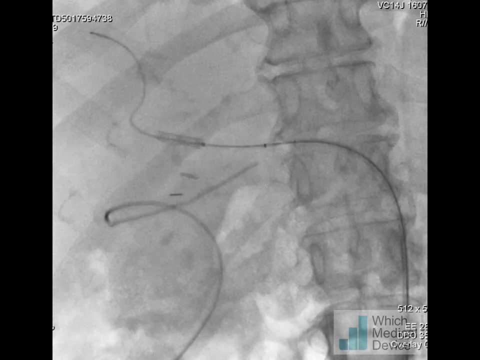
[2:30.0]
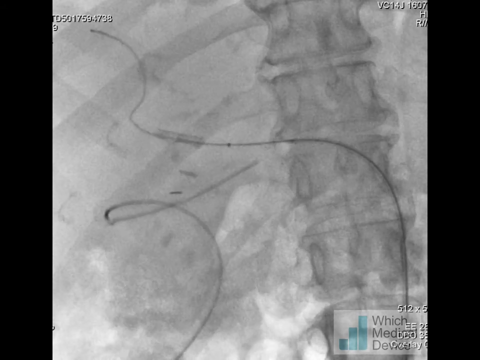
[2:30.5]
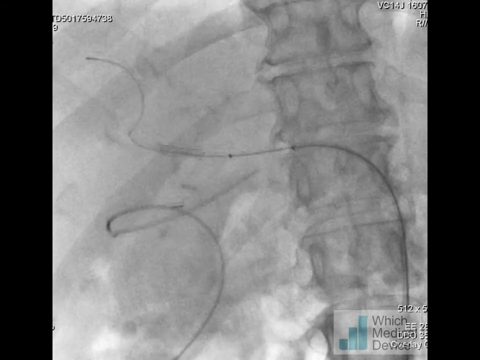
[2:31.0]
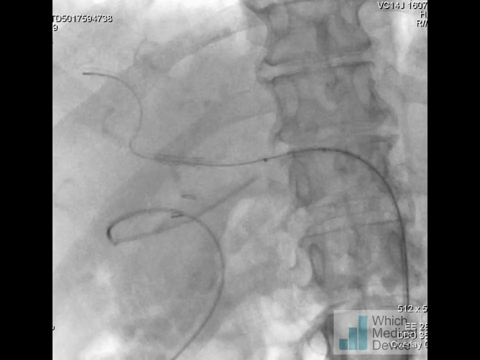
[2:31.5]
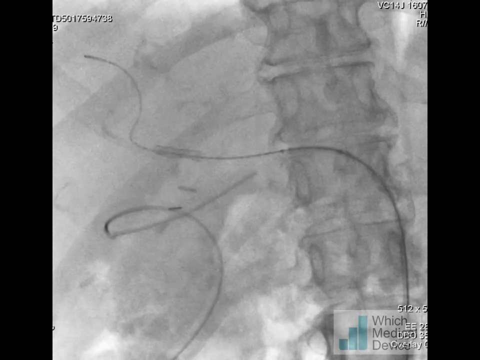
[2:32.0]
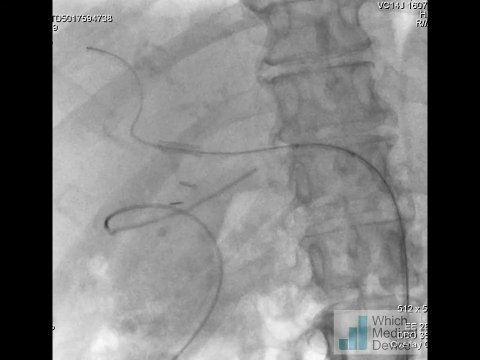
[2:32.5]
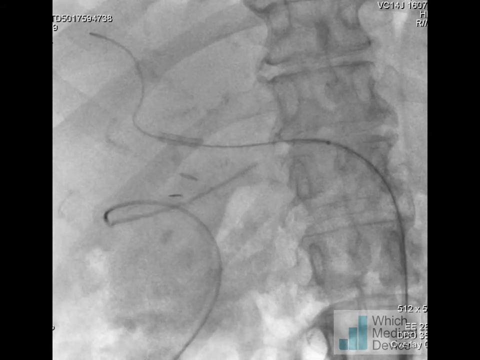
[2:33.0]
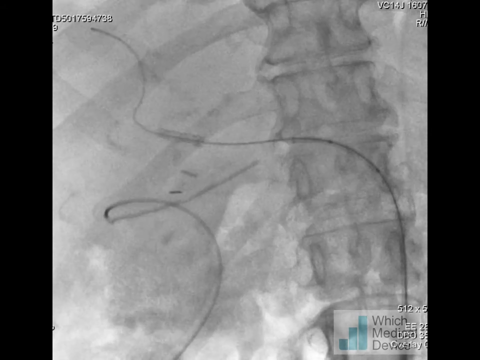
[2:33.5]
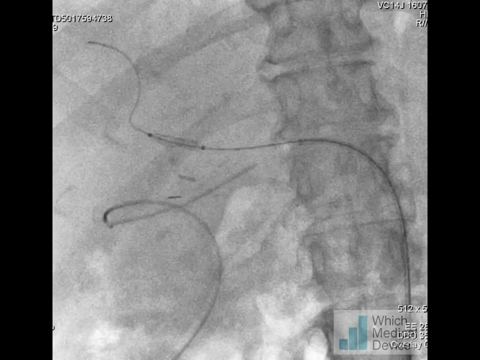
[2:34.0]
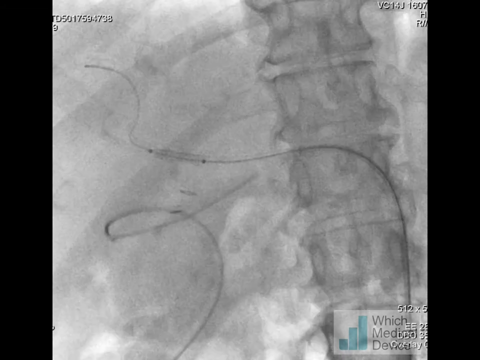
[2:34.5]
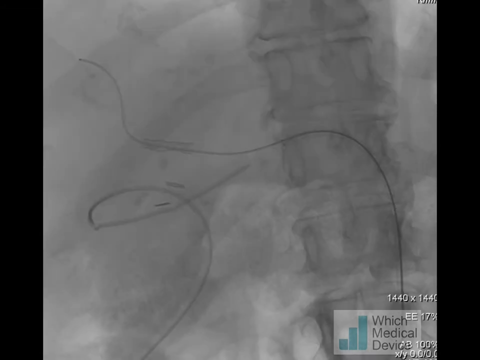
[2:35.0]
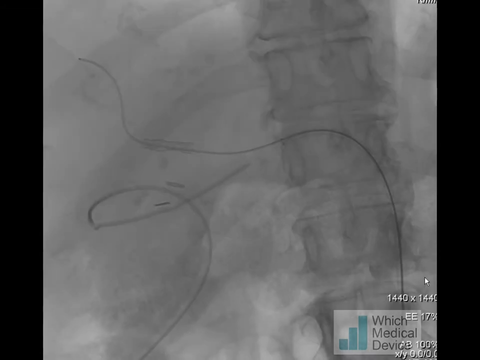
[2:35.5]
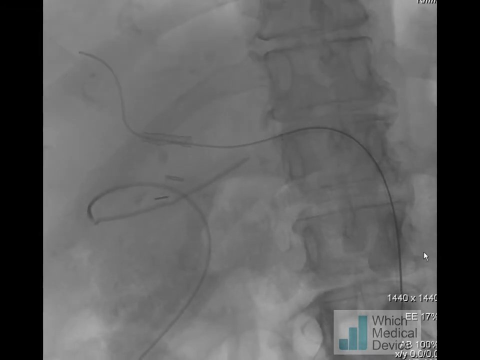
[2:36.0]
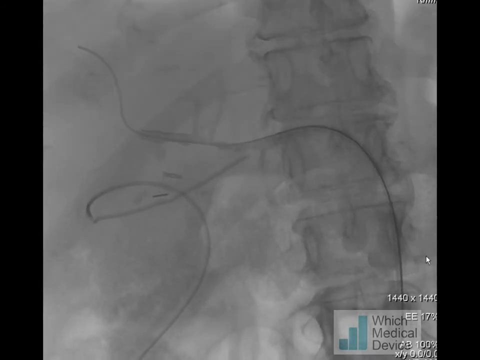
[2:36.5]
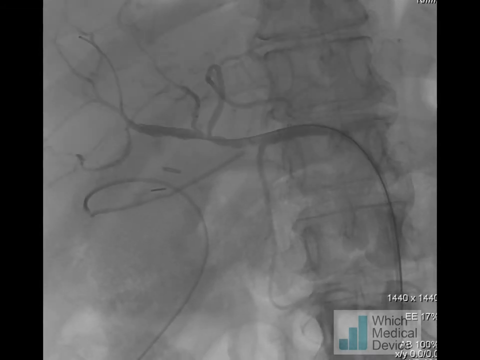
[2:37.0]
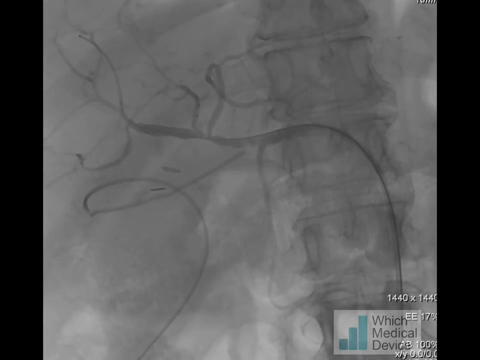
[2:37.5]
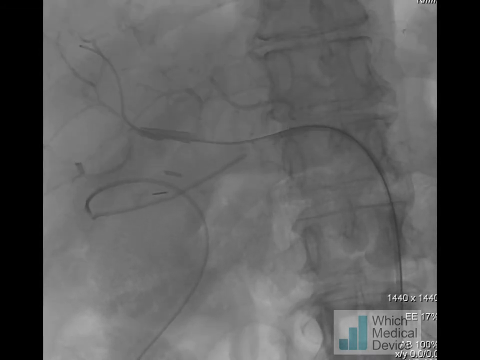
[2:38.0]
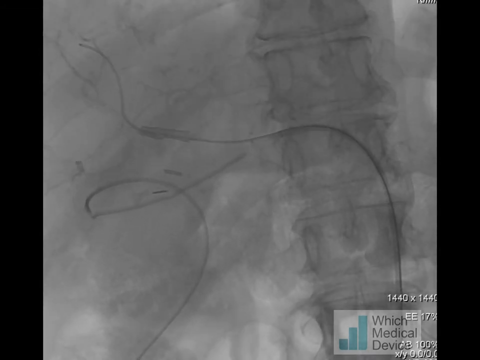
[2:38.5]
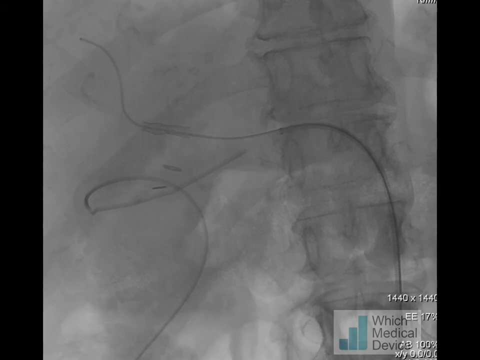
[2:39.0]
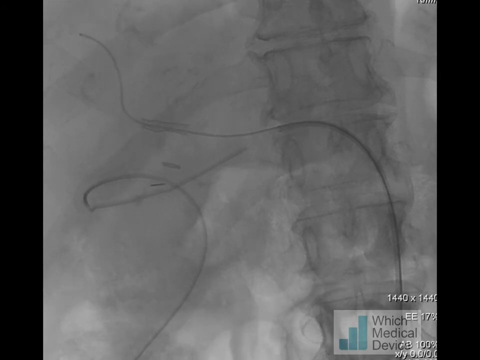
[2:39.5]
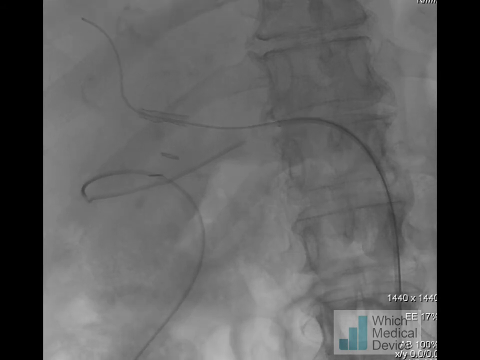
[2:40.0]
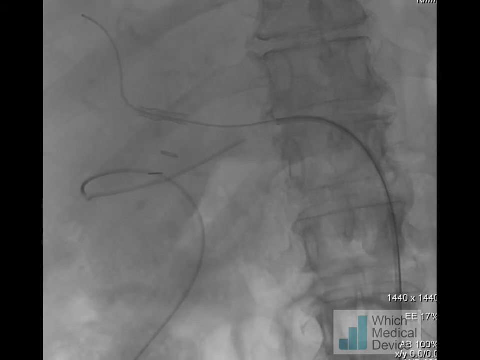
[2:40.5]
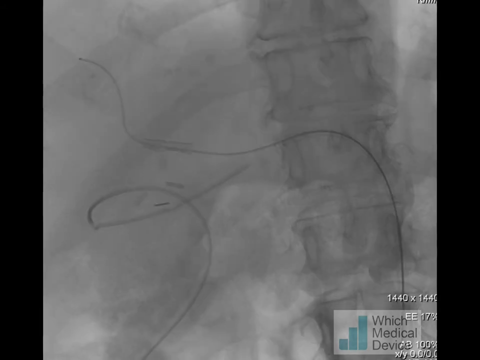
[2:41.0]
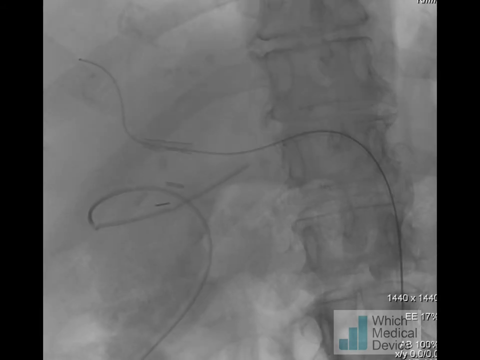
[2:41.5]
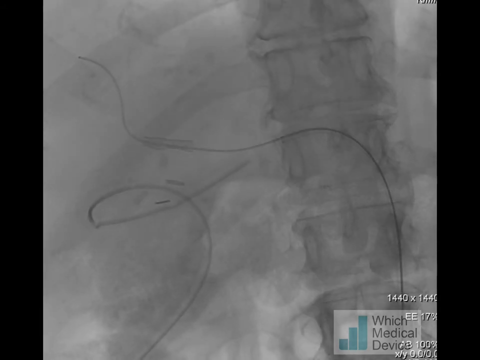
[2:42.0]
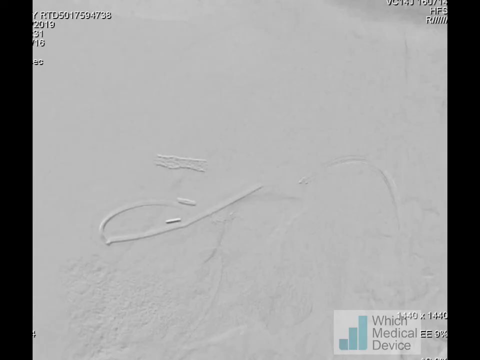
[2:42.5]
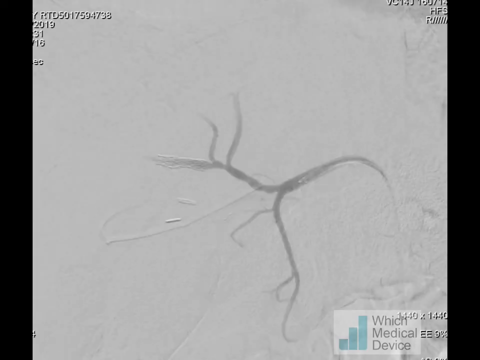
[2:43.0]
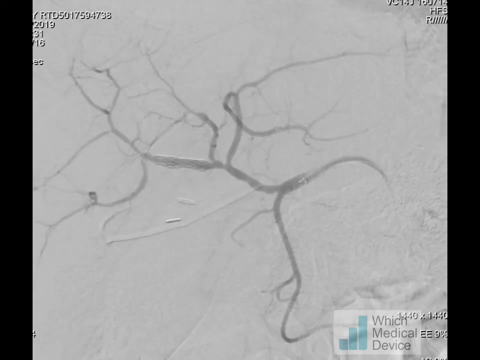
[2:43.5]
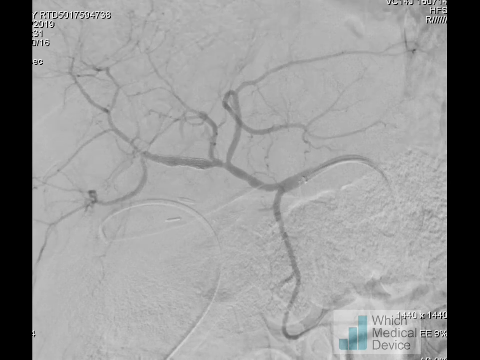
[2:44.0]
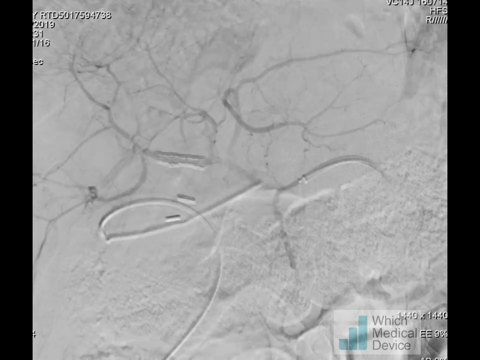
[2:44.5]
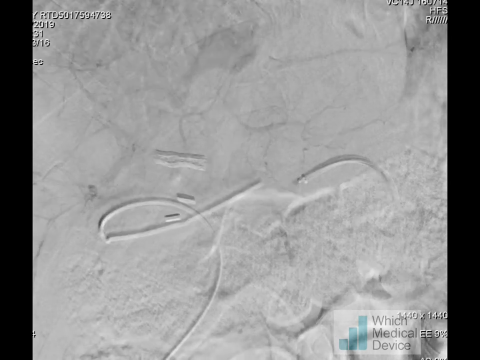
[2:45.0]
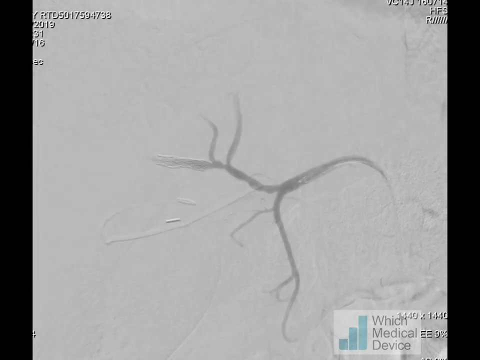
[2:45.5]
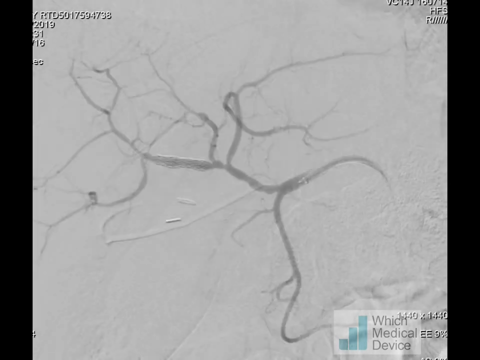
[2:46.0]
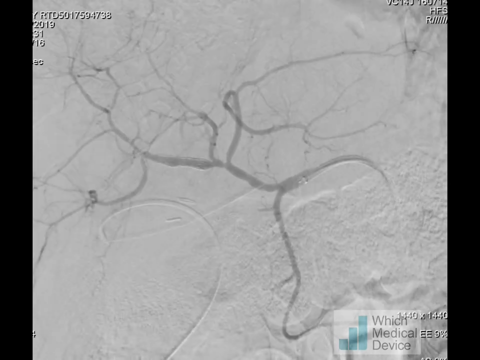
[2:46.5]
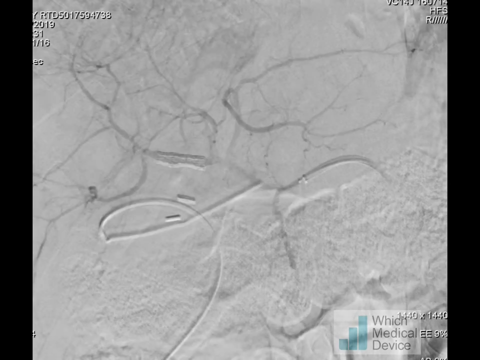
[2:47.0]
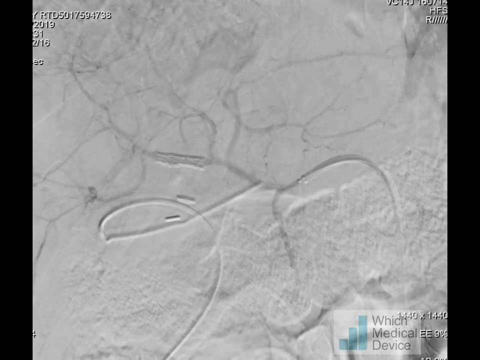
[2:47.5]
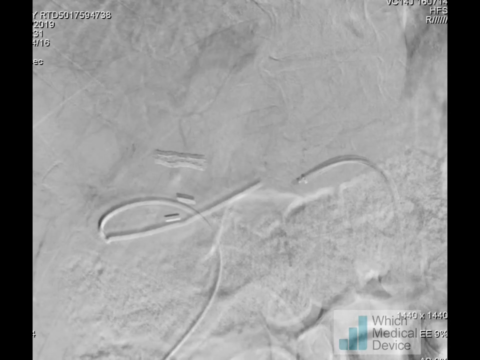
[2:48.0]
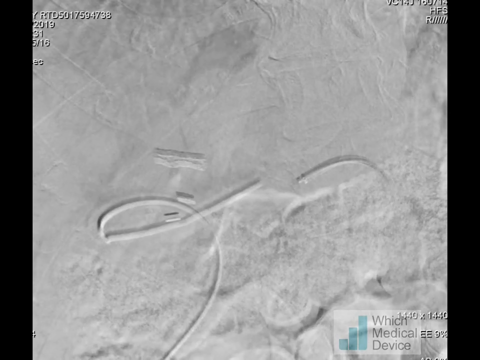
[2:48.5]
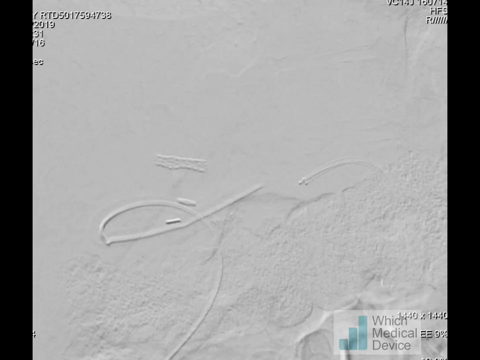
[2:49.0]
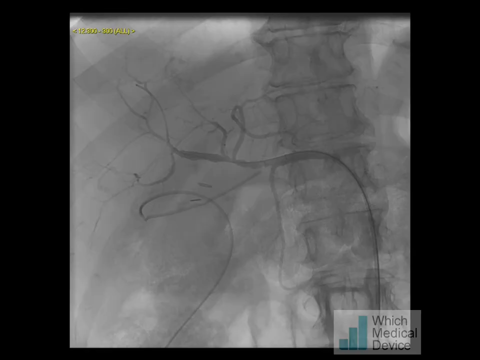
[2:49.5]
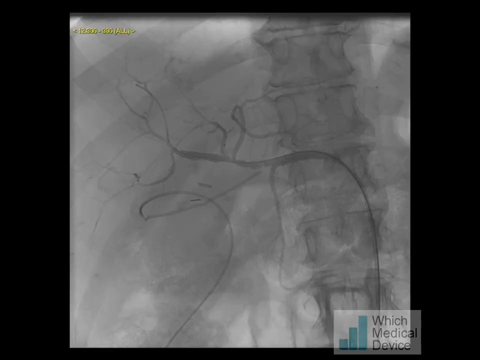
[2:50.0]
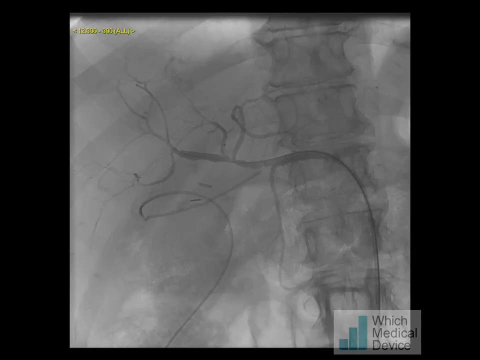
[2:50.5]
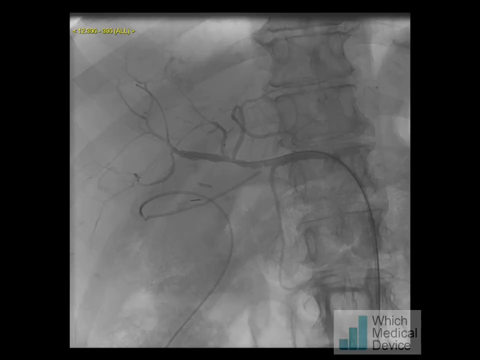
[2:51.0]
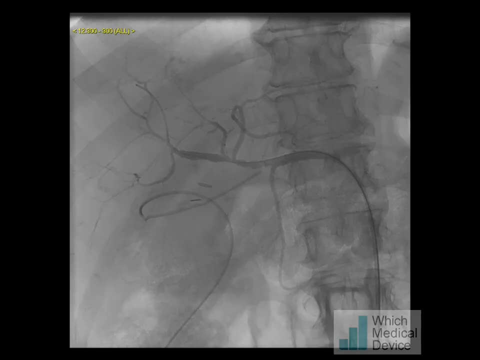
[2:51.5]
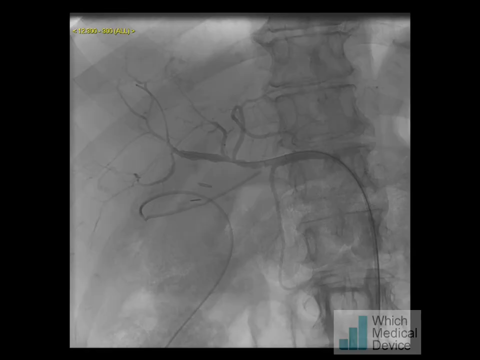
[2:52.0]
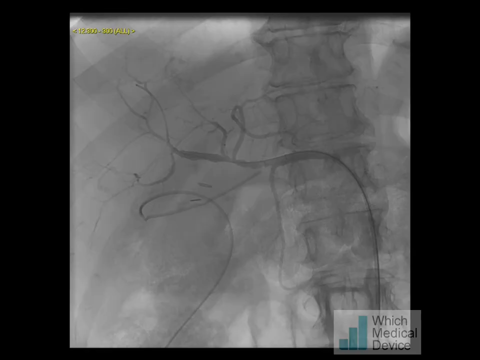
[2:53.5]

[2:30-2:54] A scan, possibly an MRI or a CT scan, shows the inside of a person's body: the spinal column, the rib cage, and blood vessels that light up periodically. Light comes in more from the top and moves down, and then the whole area turns dark while the blood vessels are lit up and appear darker. Possibly a procedure is being done in the area where the curved string was. Everything is black, white and gray. Very quickly, the blood vessels become almost all that is visible; the spinal column and rib cage disappear. It looks almost like lightning striking, with certain areas lighting up and disappearing while other areas light up in the background.